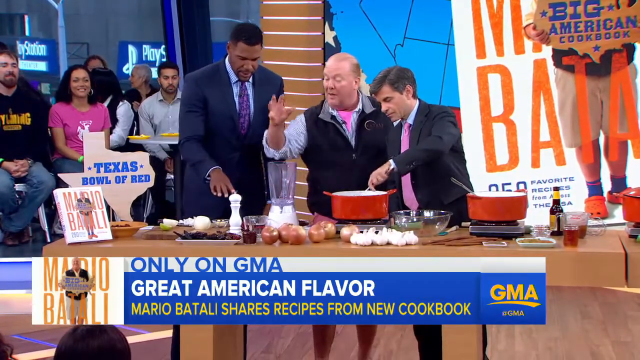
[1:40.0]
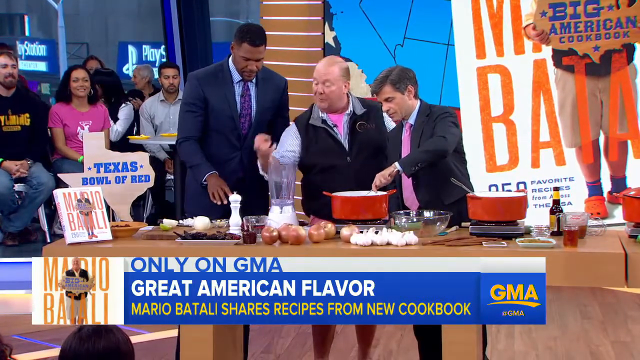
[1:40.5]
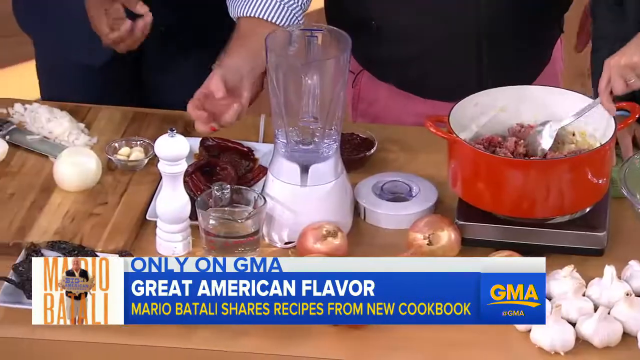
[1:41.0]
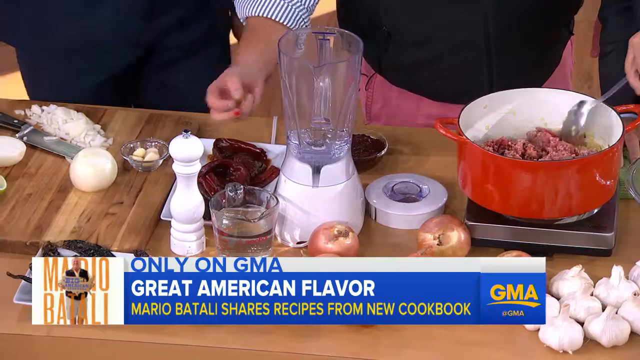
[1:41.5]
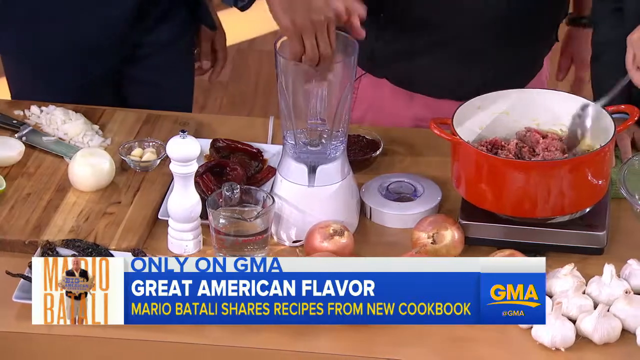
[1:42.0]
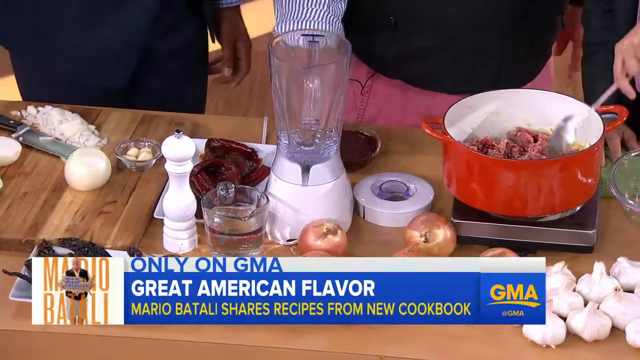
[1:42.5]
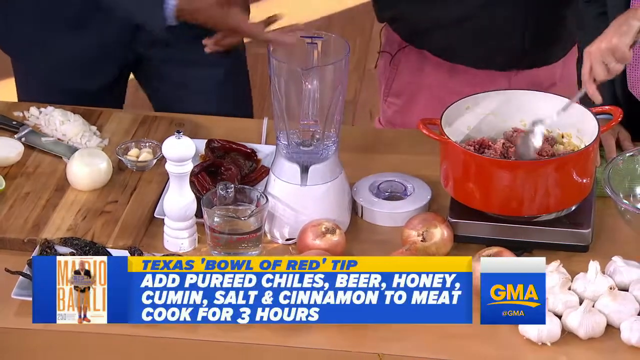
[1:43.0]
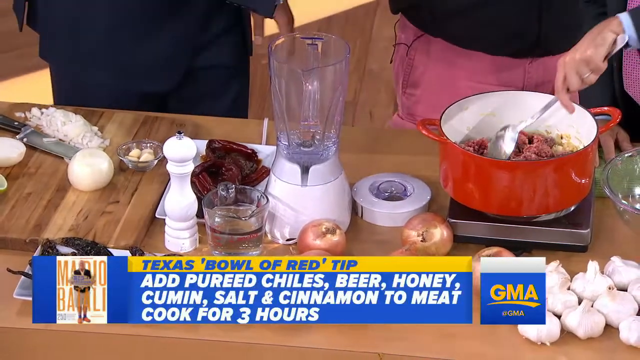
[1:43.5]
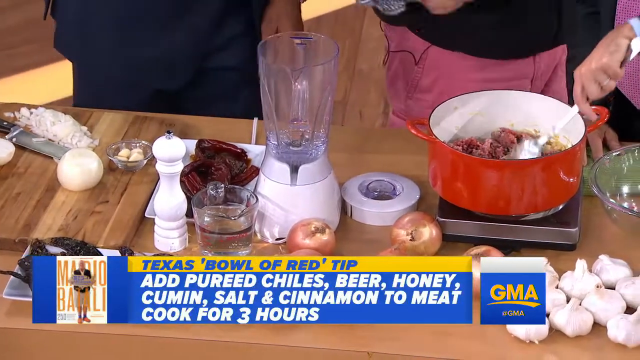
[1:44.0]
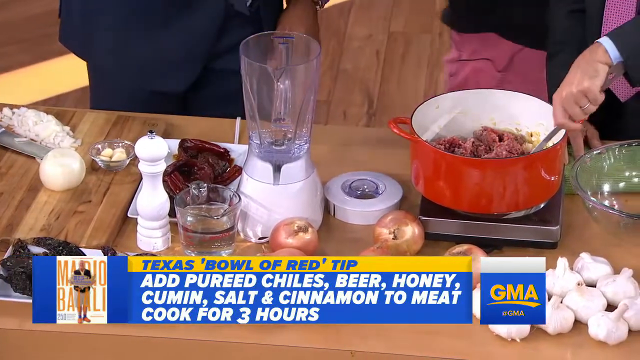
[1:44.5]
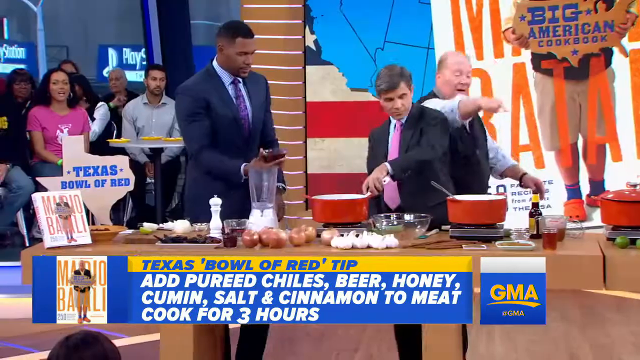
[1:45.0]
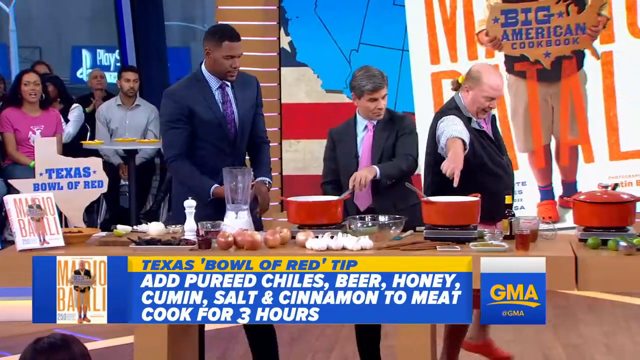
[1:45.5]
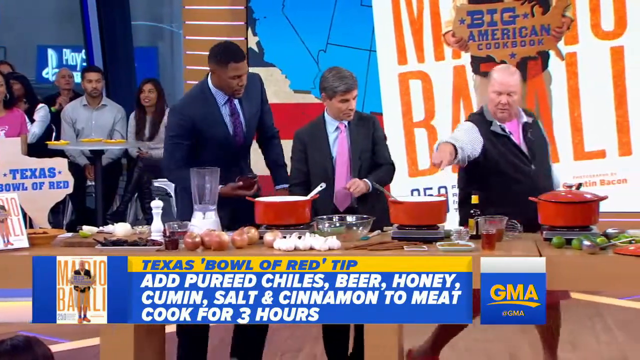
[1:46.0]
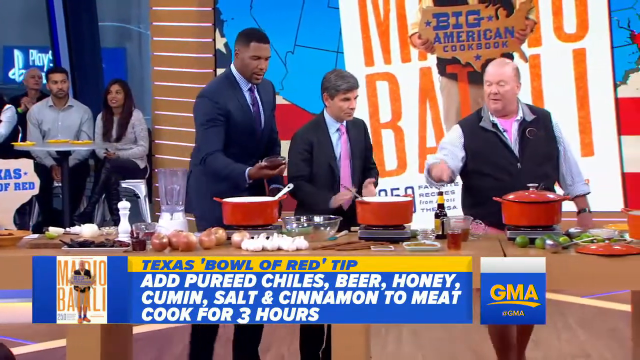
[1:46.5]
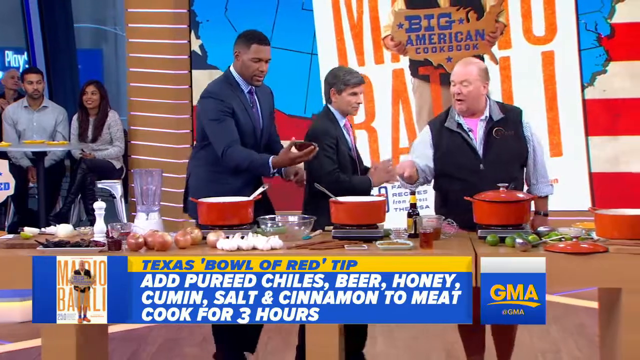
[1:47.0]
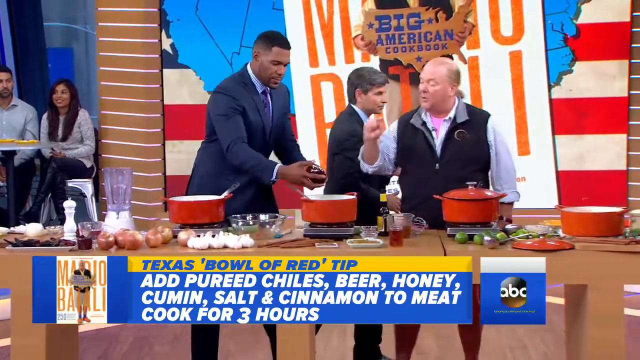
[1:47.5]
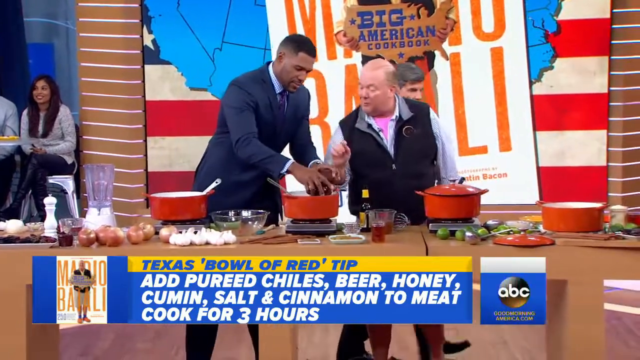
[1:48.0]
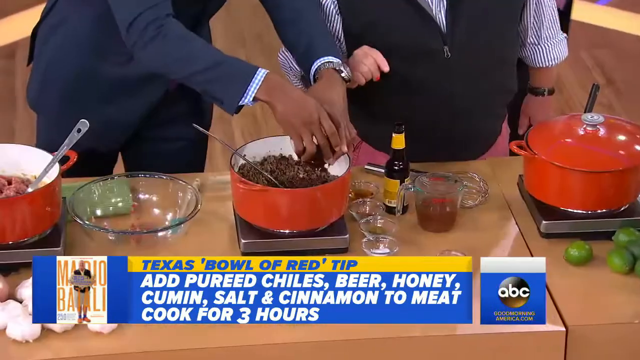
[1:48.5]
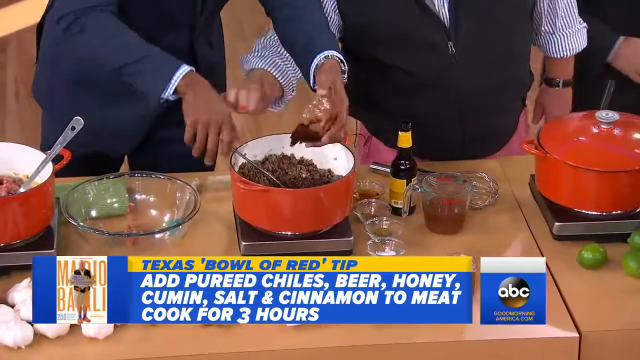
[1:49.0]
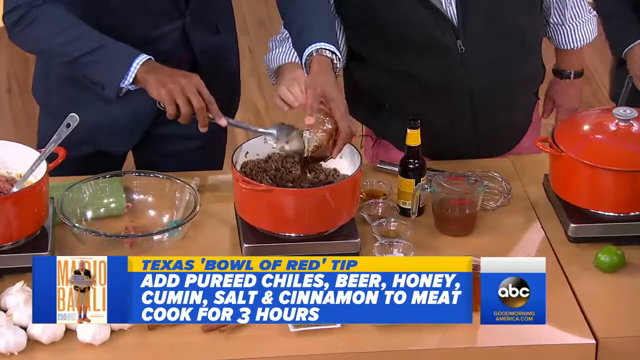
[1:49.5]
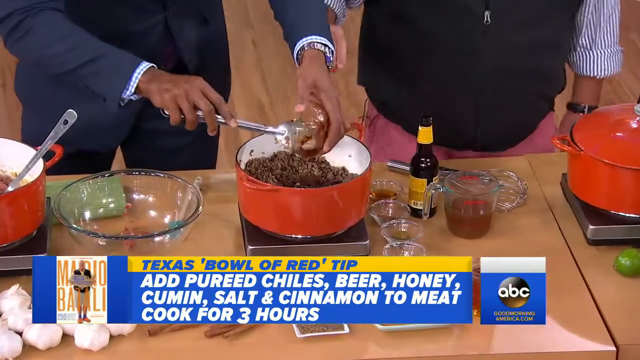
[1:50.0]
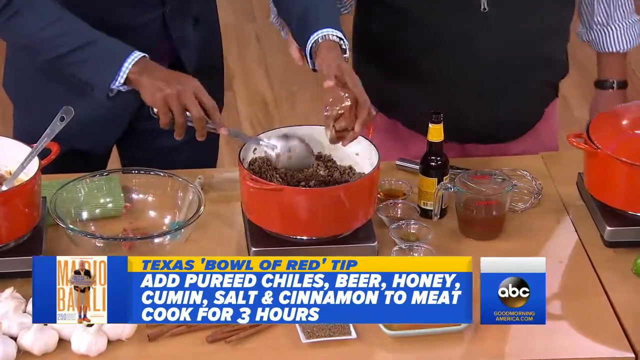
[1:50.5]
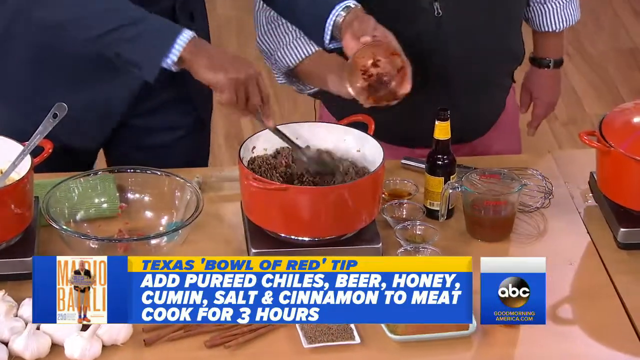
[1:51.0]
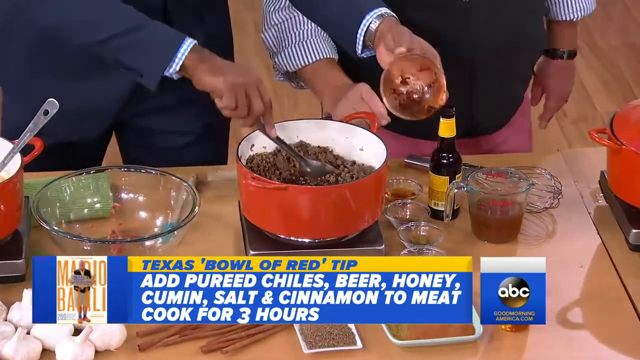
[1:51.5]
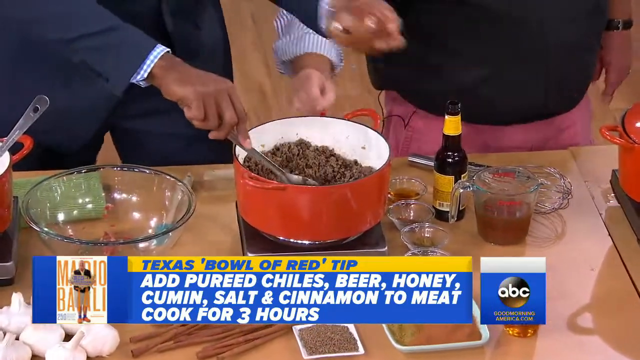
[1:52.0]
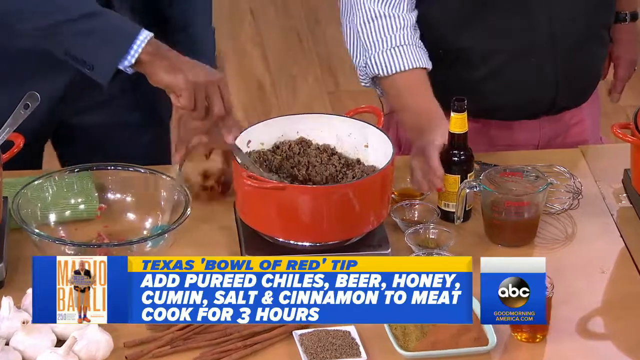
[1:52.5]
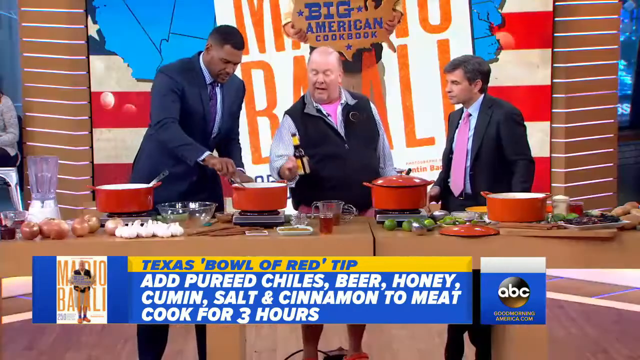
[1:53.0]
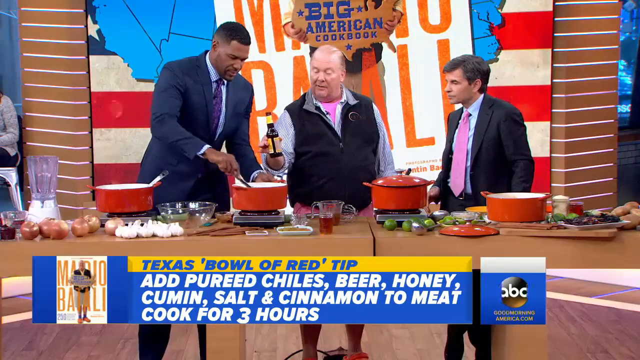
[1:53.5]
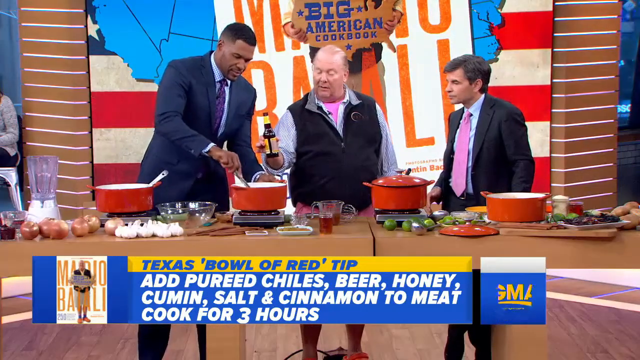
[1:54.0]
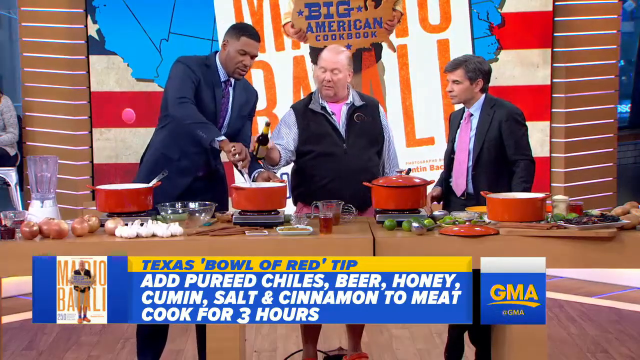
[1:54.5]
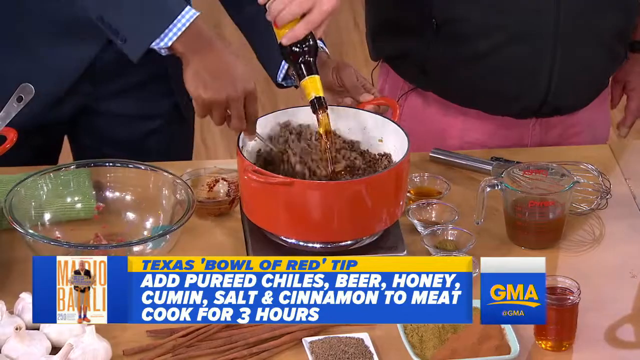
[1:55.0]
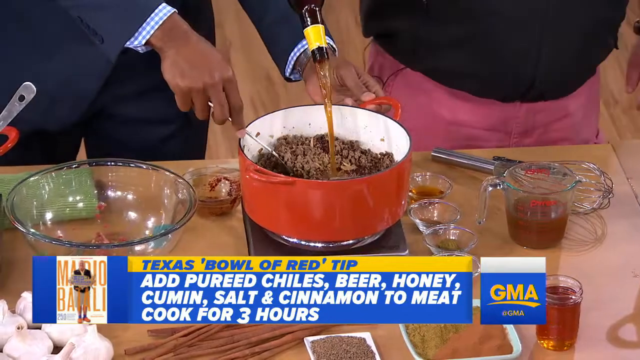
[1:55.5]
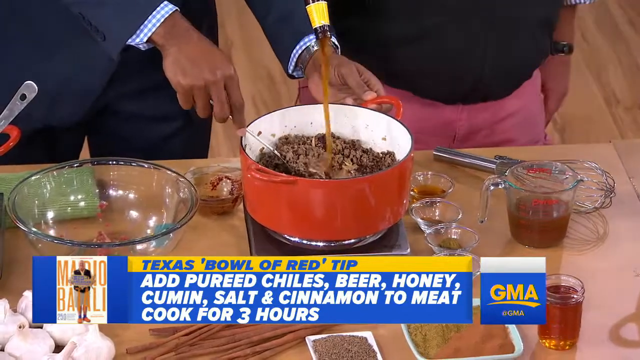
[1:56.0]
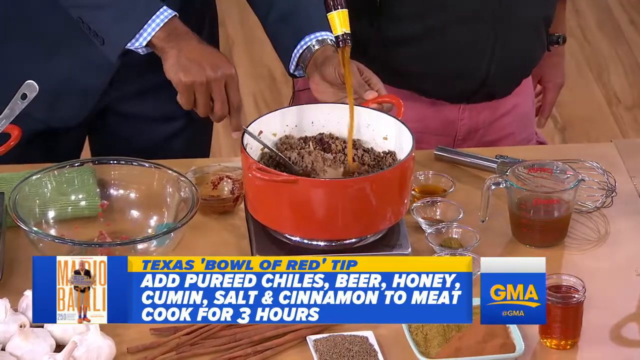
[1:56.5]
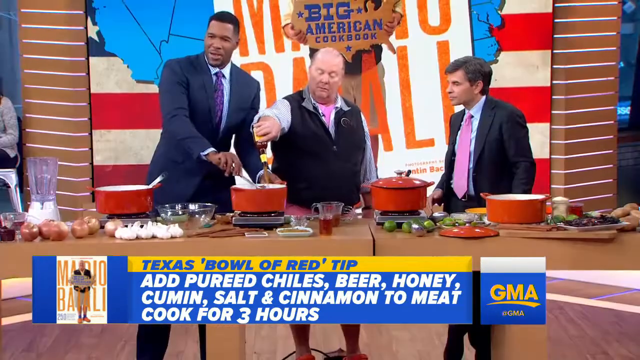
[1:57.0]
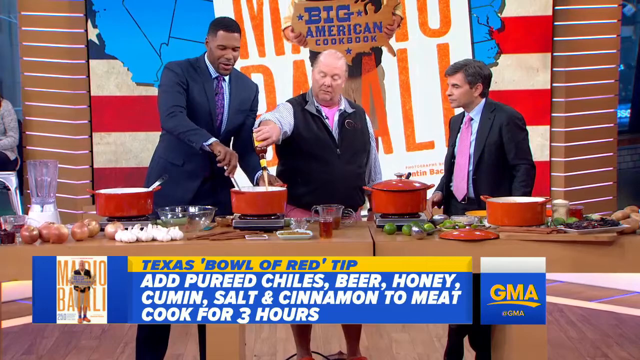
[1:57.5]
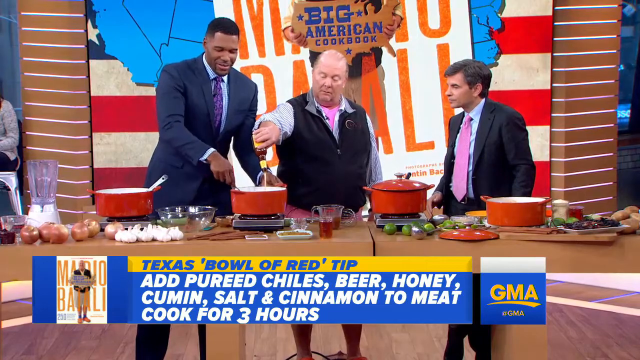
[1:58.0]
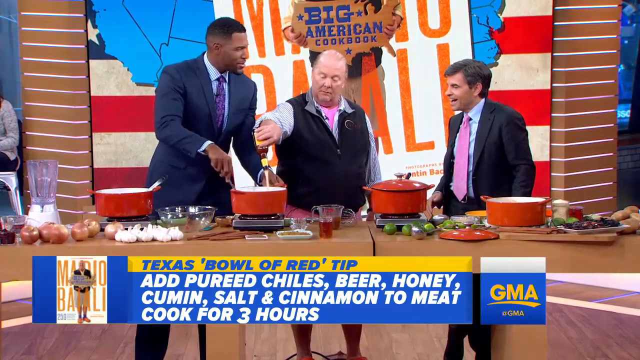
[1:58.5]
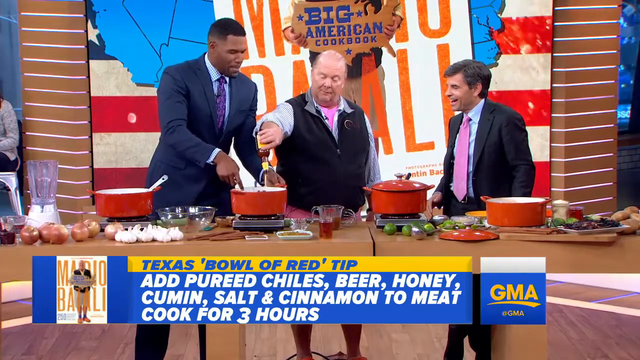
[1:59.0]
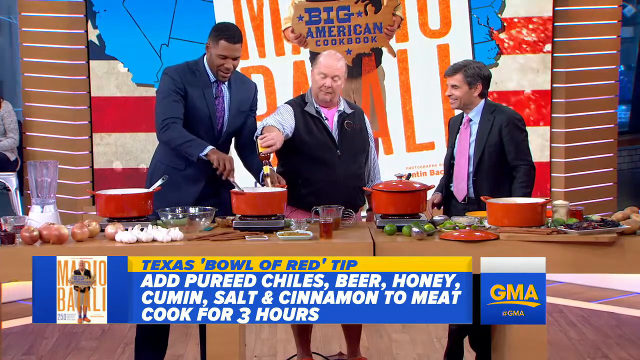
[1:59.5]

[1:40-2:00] The man in the middle uses his hands to describe the food he is making and seems to put seasoning into the blender. The man to his left has his left hand on a spoon, stirring the meat and other ingredients in the pot. They move over to their left side of the table and add more ingredients from a clear bowl. The man in the suit holds the bowl with his left hand and uses his right hand to put chili and ingredients into it. The man in the center picks up, with his right hand, a bottle of what seems to be some sort of oil, seasoning or beer, pours it completely into the glass bottle, and shakes it, and the man to his left pats him on the back.